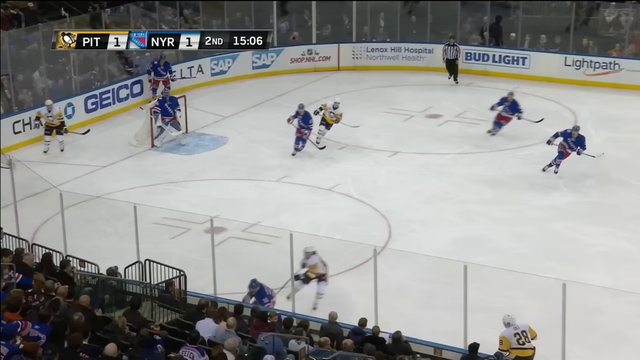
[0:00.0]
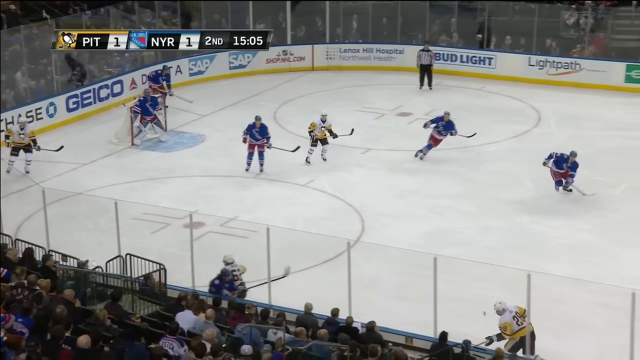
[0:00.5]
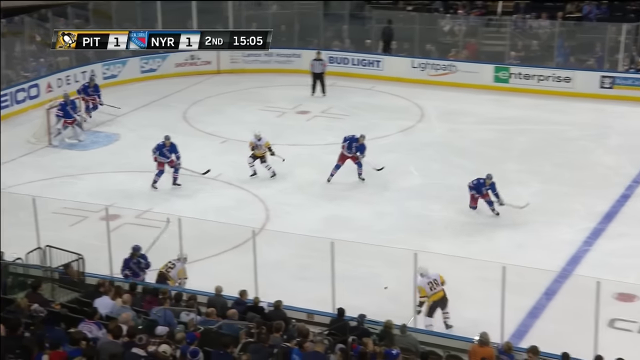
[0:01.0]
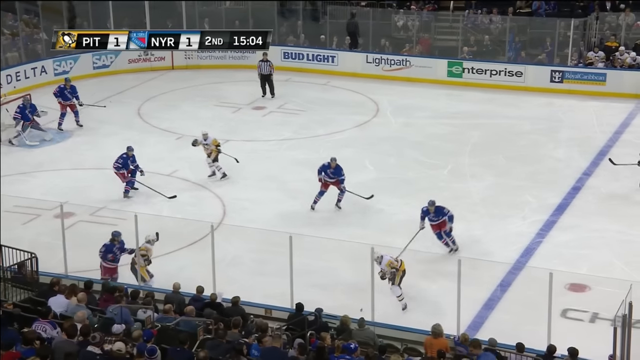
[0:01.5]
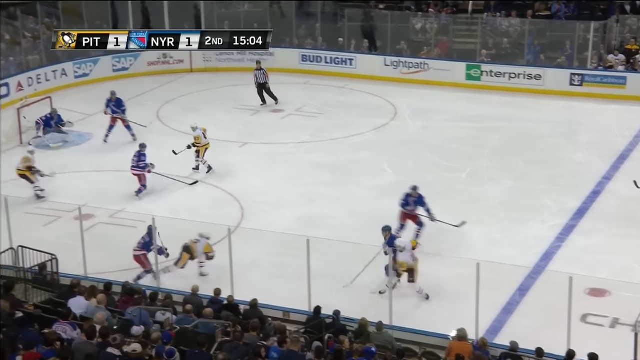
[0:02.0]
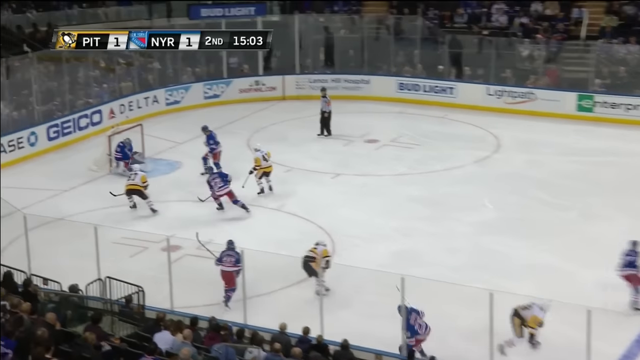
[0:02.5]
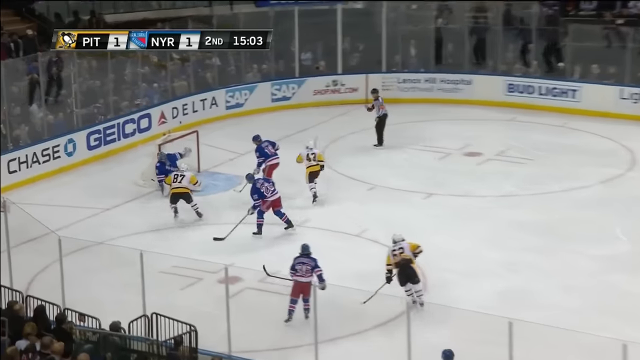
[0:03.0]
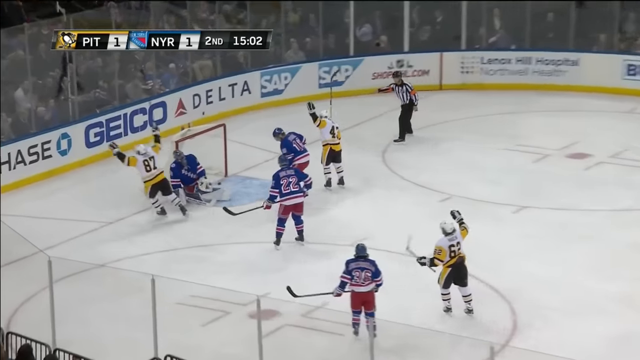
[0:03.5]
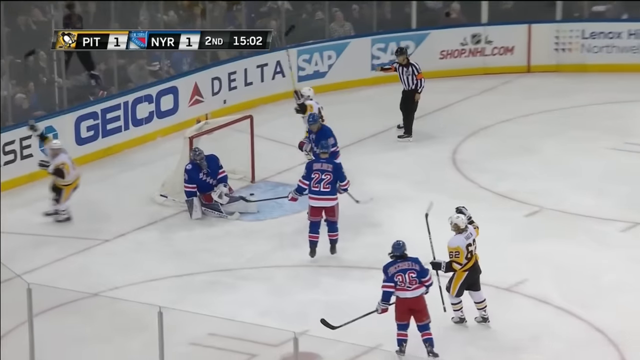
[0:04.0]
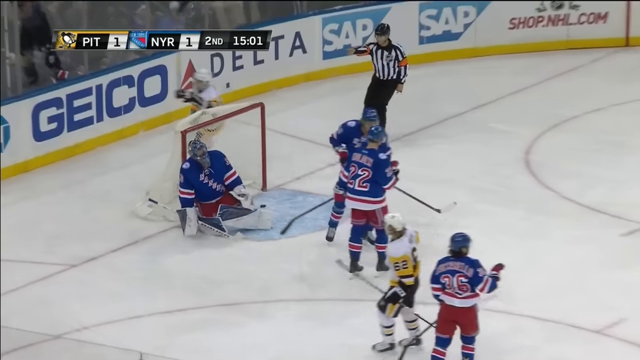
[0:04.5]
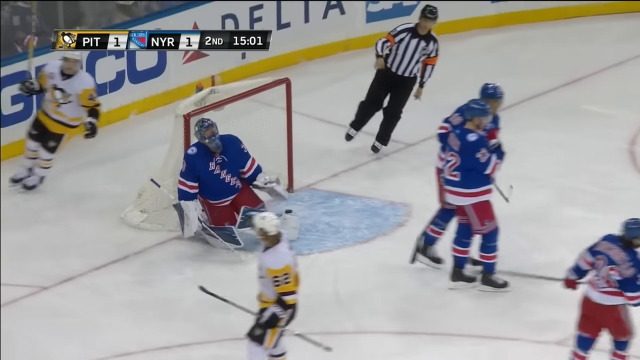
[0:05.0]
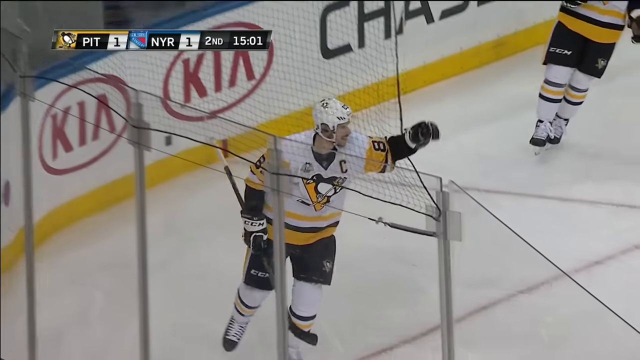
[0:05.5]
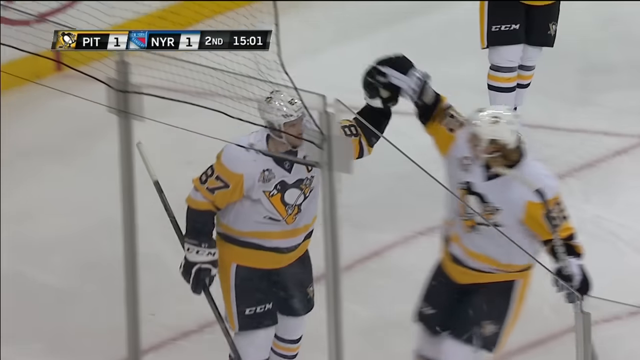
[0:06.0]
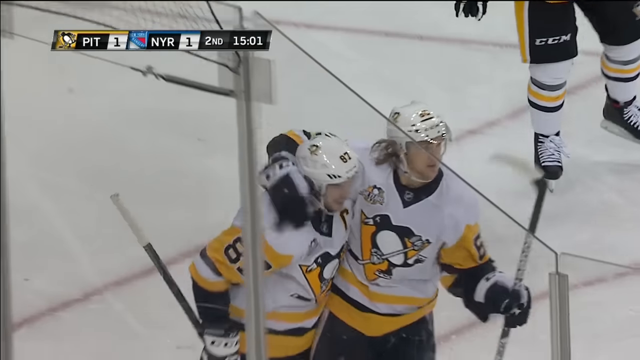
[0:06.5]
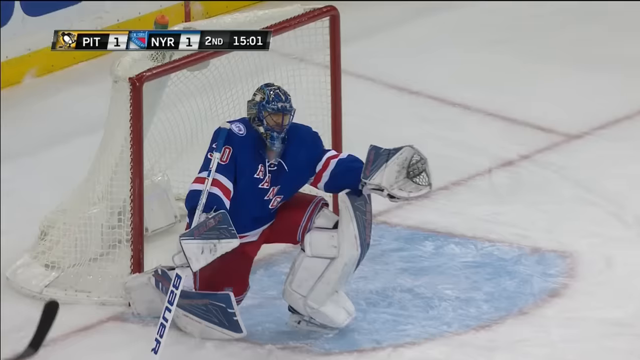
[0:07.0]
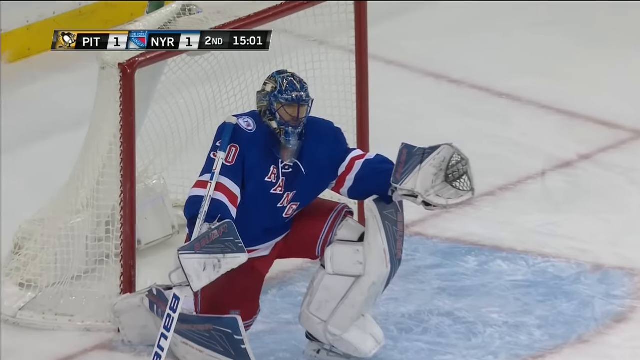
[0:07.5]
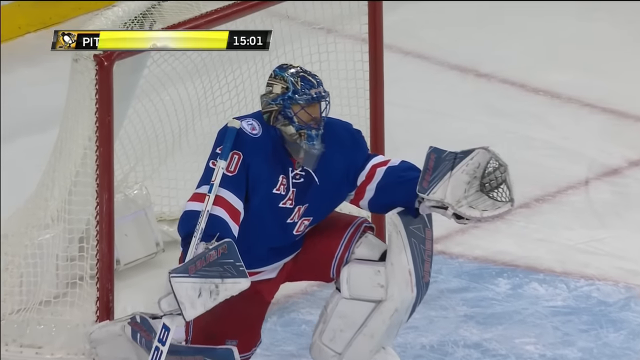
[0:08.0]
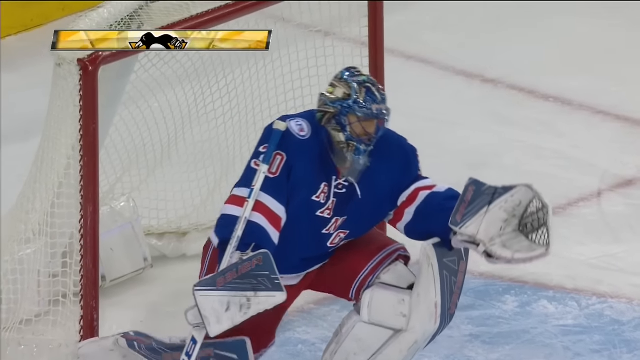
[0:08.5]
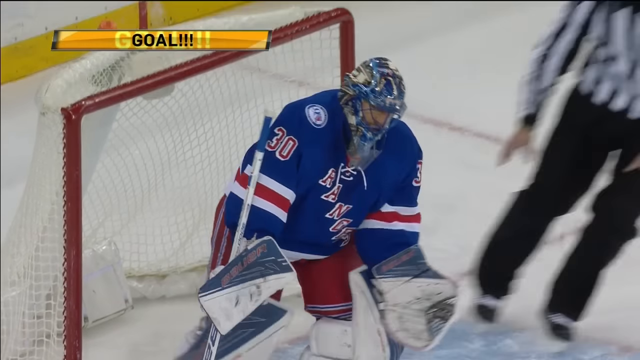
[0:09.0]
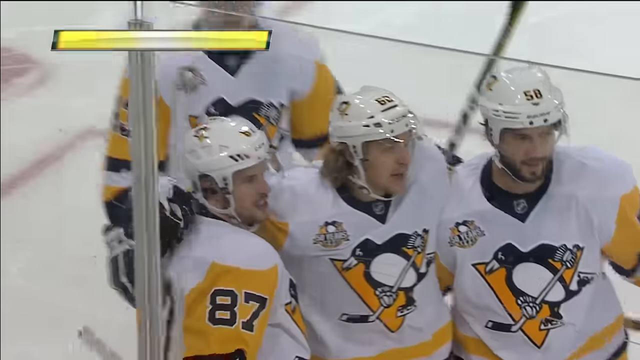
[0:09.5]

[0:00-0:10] An NHL hockey game is underway, with various hockey players skating on ice in a stadium. The Pittsburgh Penguins wear white uniforms and the New York Rangers wear blue uniforms. The score is 1-1 in the second period with 15 minutes to go. The puck is on the Rangers' side of the ice, and one of the Penguins players shoots at the goal. The shot gets by the Rangers goalkeeper and he scores. Various Penguins players throw their hands in the air to celebrate. The view briefly zooms in on the goalkeeper, then Sidney Crosby and another Penguins player give each other a high five and a hug as they skate around the ice. The goalkeeper is shown again; he stays down on one knee before slowly getting up. Various Penguins players then celebrate together on the ice.